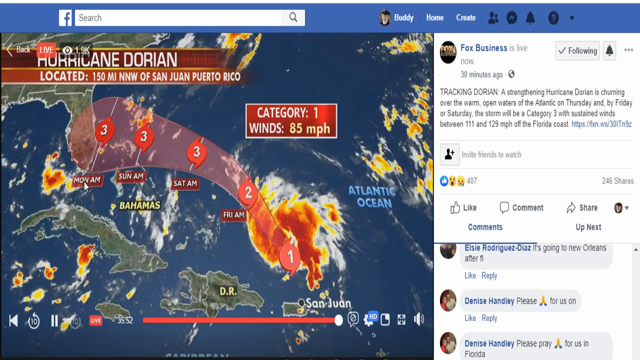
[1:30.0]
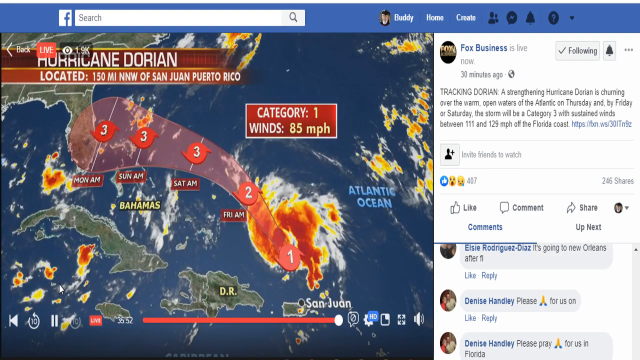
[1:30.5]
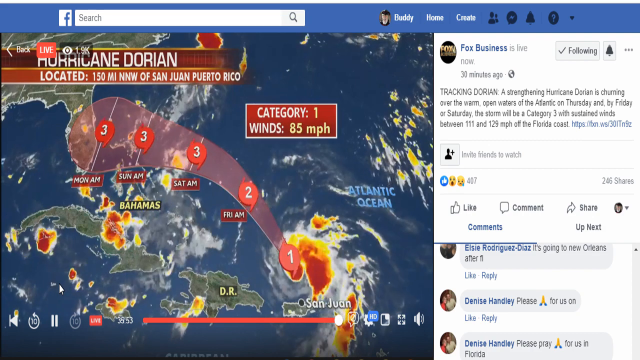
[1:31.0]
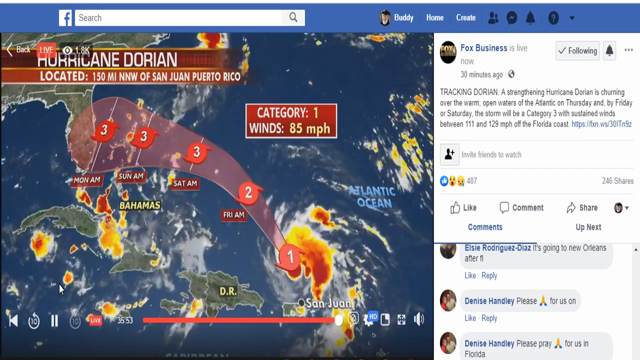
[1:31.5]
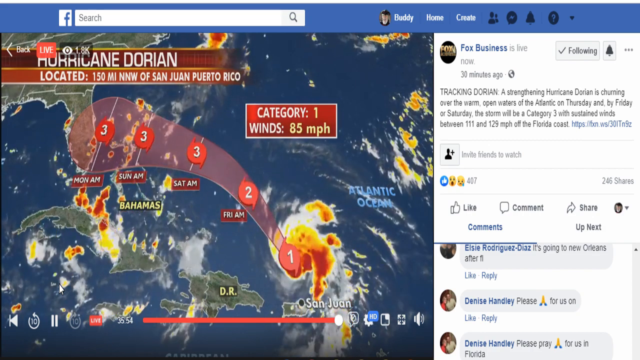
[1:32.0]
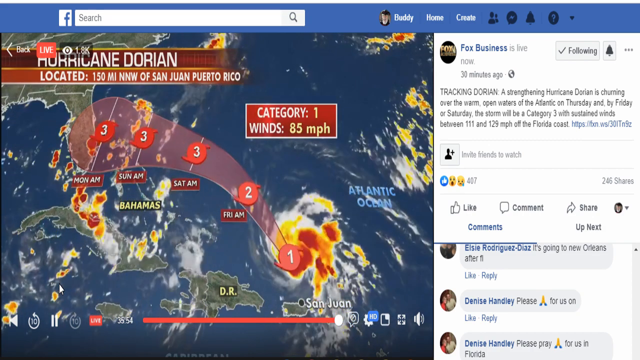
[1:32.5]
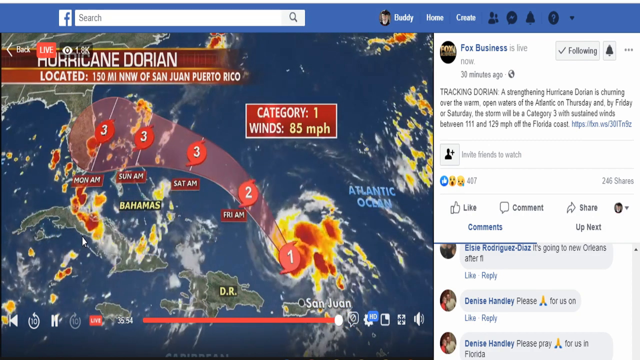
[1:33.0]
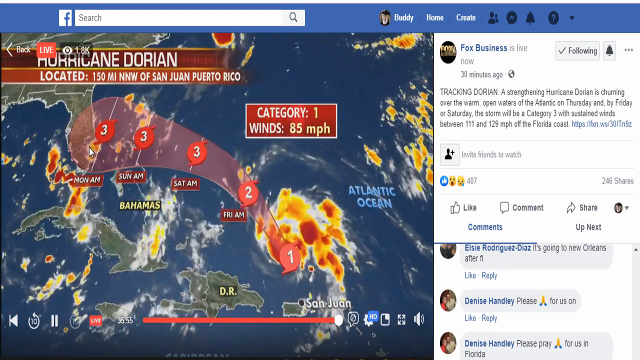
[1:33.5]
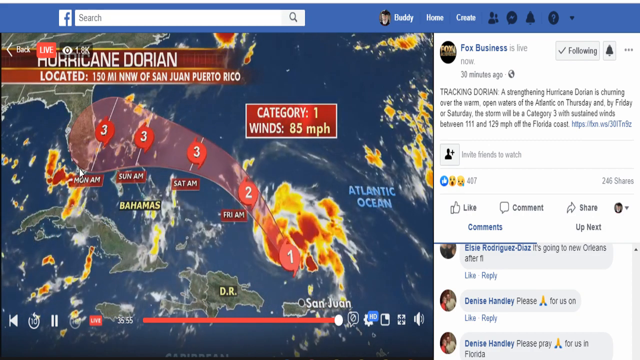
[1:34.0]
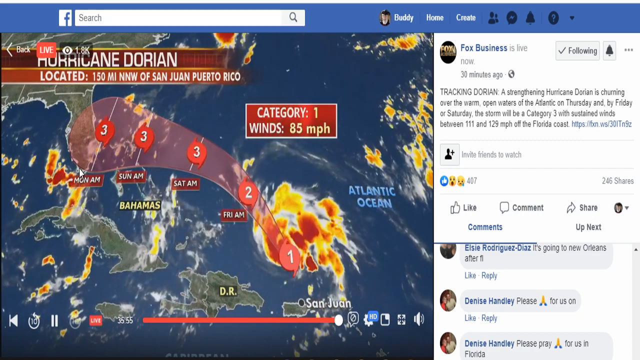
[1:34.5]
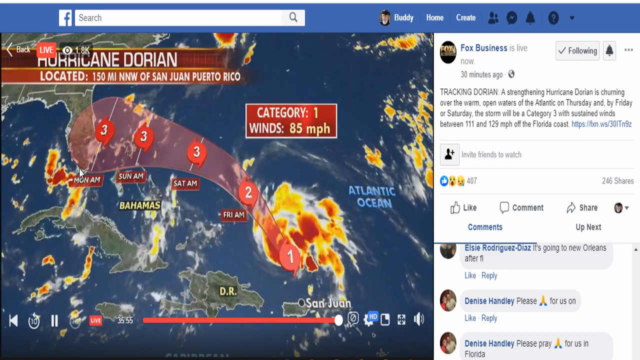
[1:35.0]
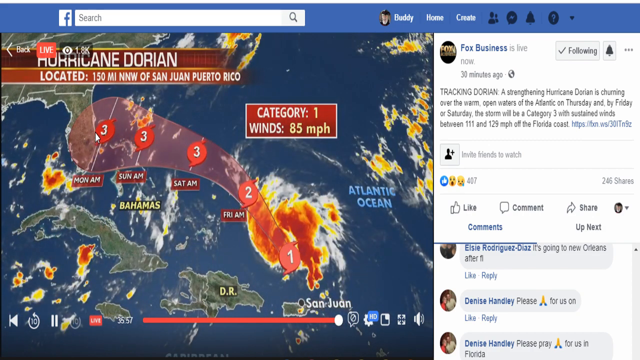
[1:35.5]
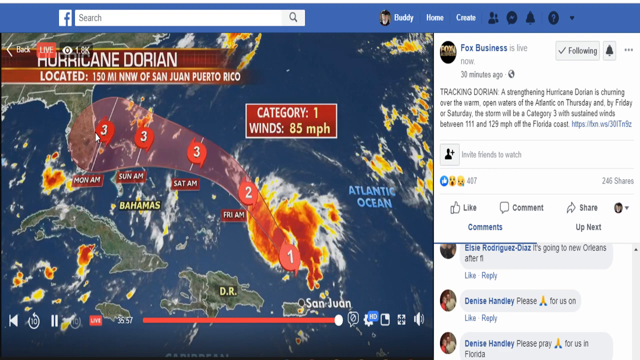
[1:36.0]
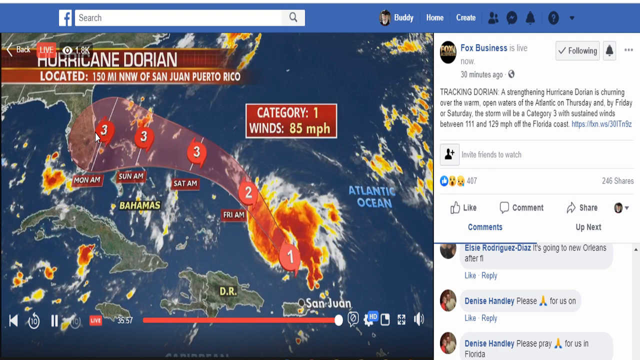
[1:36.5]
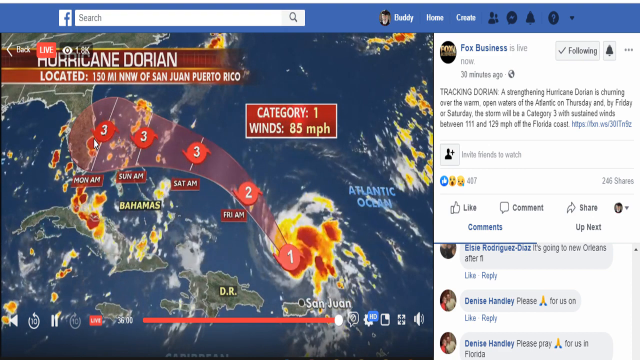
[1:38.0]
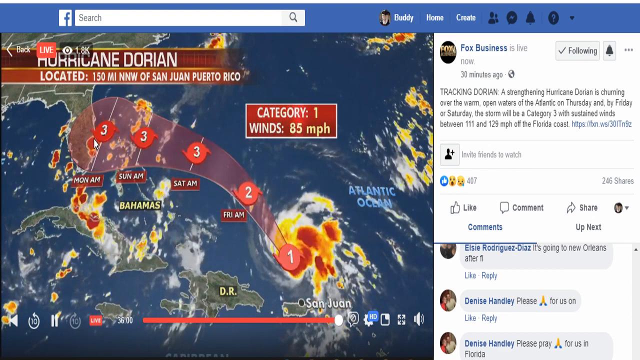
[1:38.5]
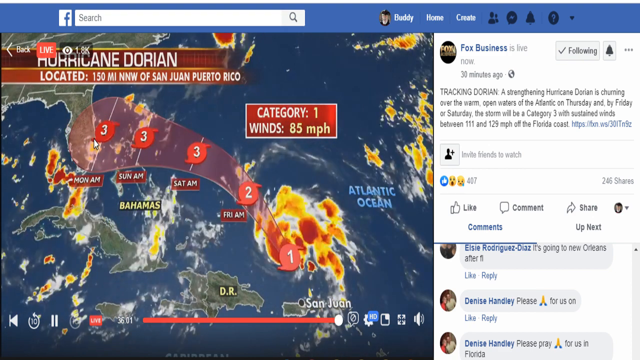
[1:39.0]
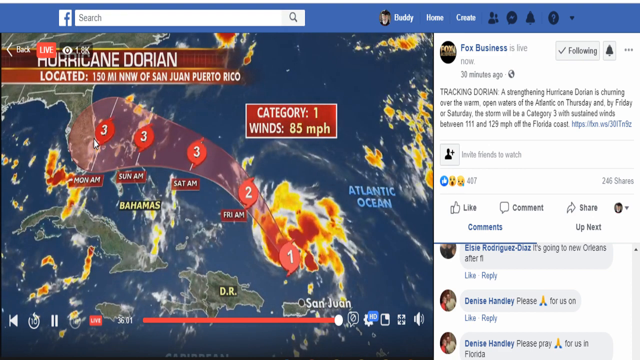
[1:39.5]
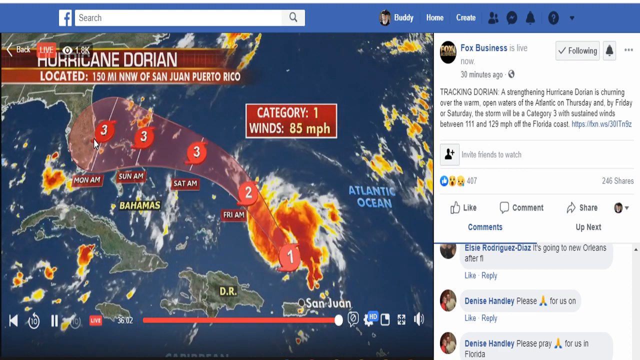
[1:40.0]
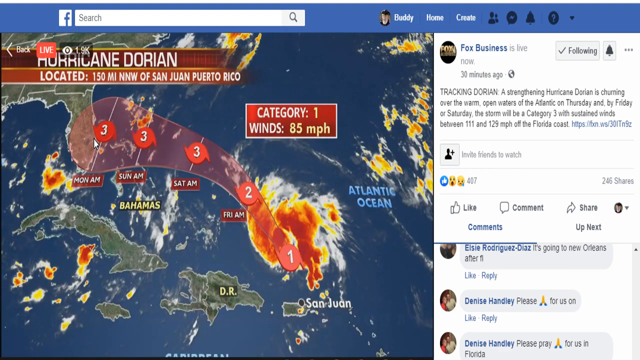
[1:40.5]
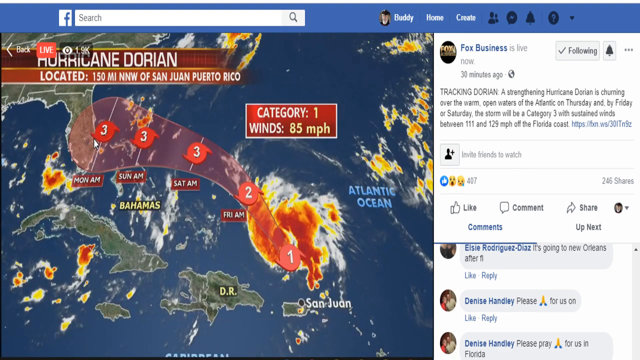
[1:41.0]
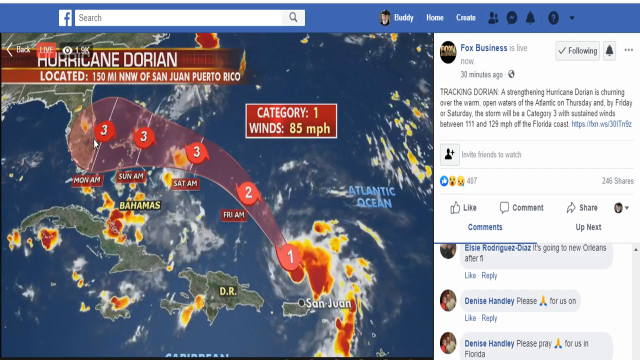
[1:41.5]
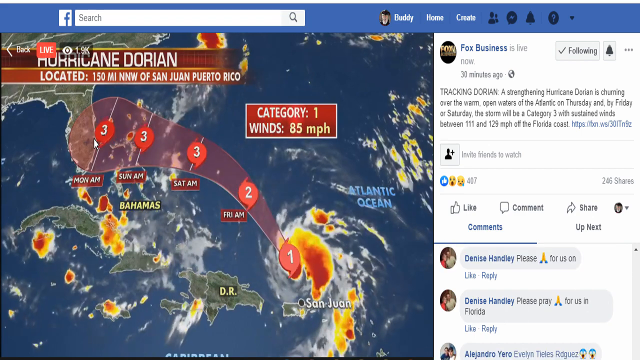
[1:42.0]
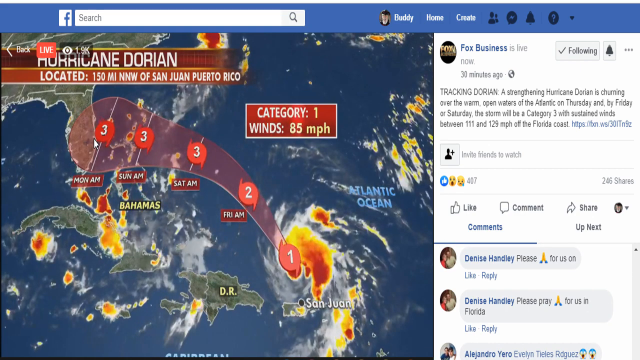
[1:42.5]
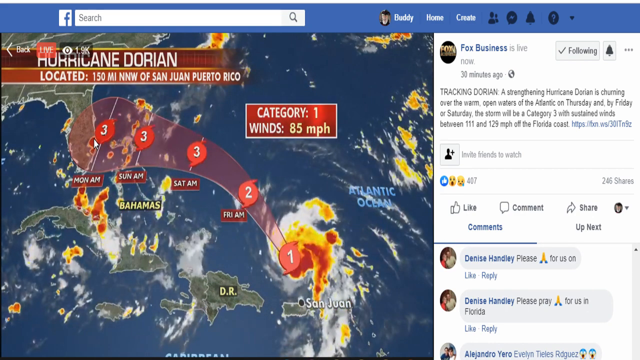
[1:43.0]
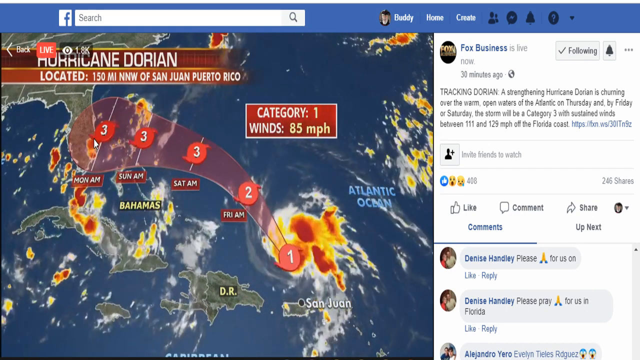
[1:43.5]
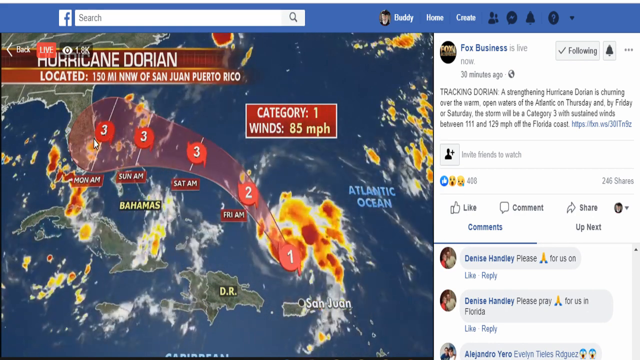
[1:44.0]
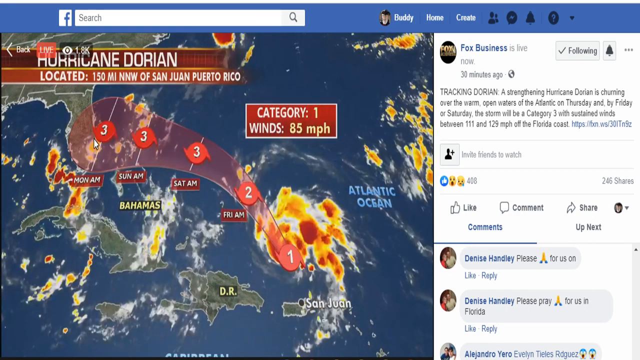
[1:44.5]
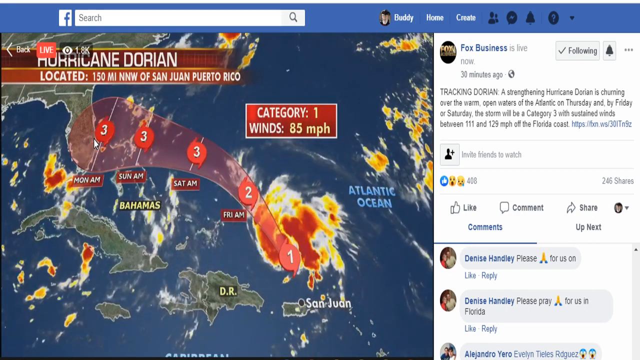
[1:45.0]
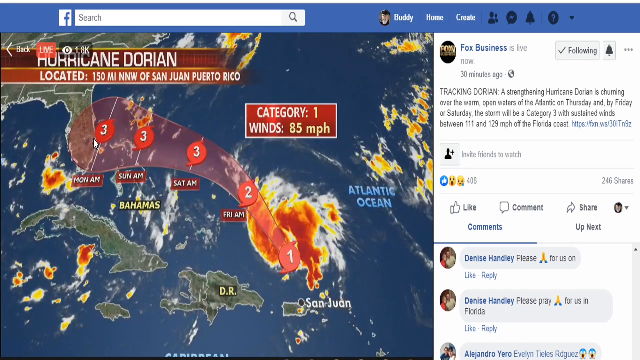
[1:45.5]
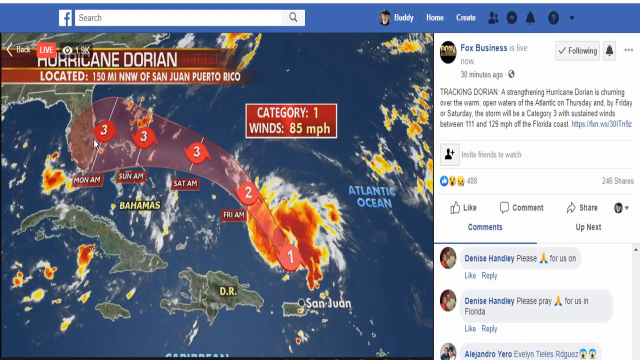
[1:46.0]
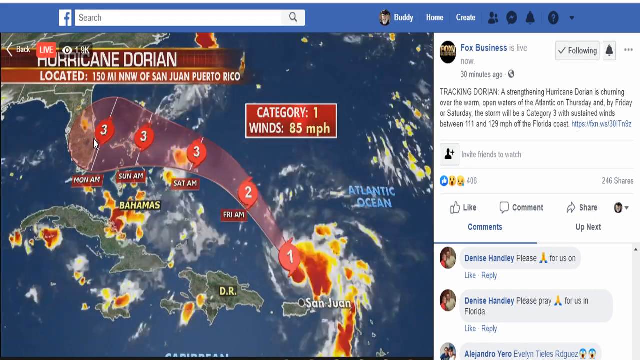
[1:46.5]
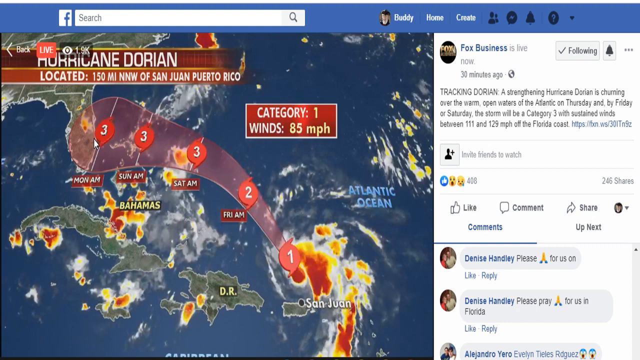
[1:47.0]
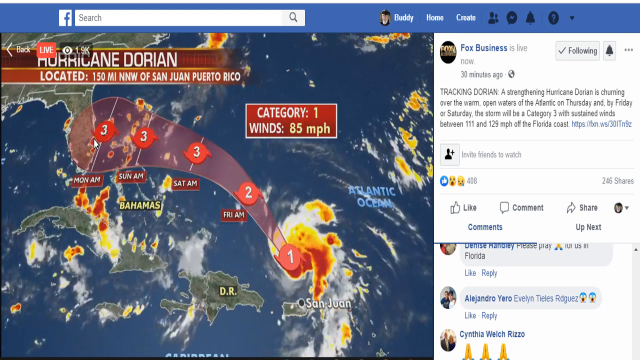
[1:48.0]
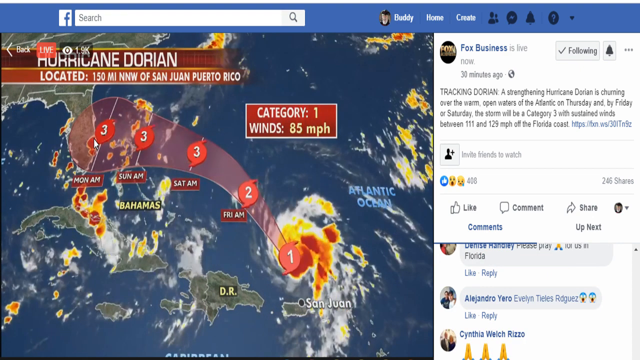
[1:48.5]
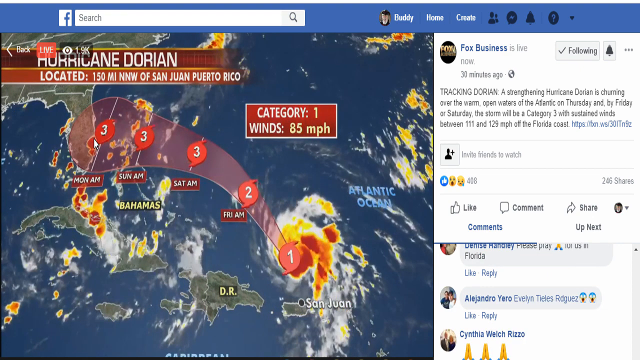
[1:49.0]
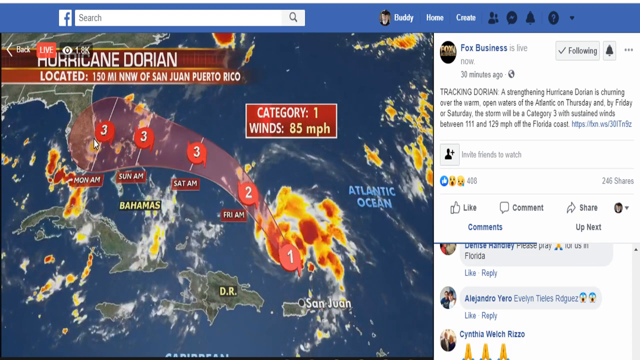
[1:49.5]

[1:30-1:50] The Facebook live stream returns, but instead of the OBS screen, the right side now shows that Fox Business is live, with the official caption and the account that posted the live stream. The account can be followed, and it seems to be followed already, since there is a check mark next to the following box, with a notification box next to it. The caption begins "tracking Dorian" in all caps and continues: "is turning over the warm open waters of the Atlantic on Thursday and by Friday or Saturday the storm will be a category three with sustained winds between 111 and 129 miles per hour off the Florida coast", followed by a link. Below is a live comment section where people are quickly commenting. Over 400 people have reacted to the post; most reactions are likes, the second most common is surprised, followed by a crying face. The post has over 200 shares.